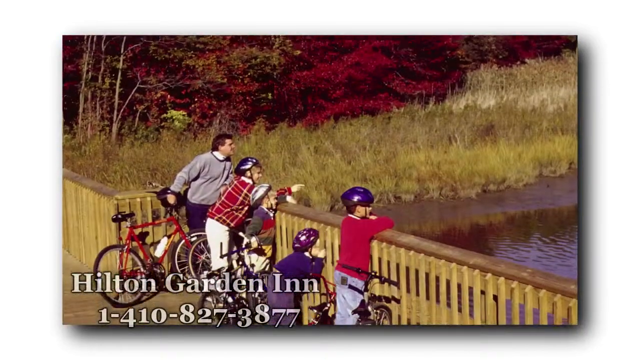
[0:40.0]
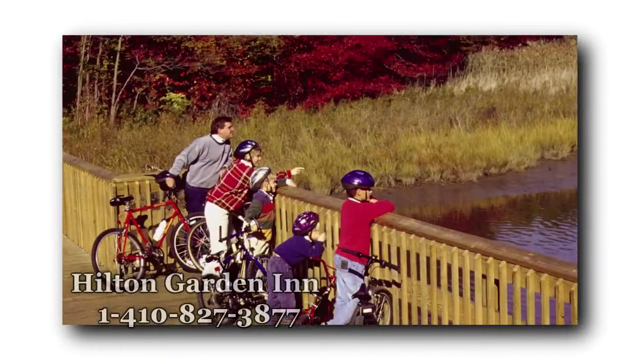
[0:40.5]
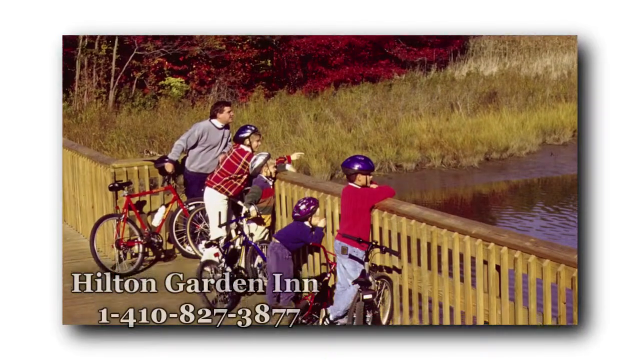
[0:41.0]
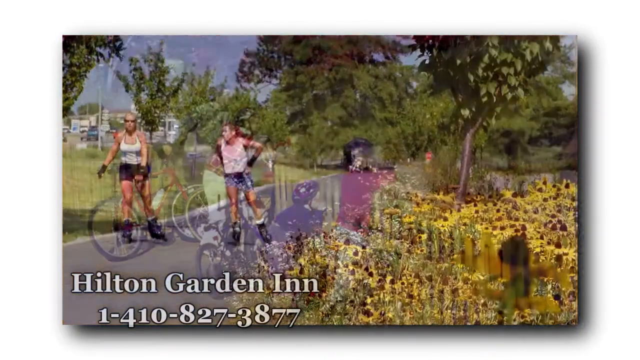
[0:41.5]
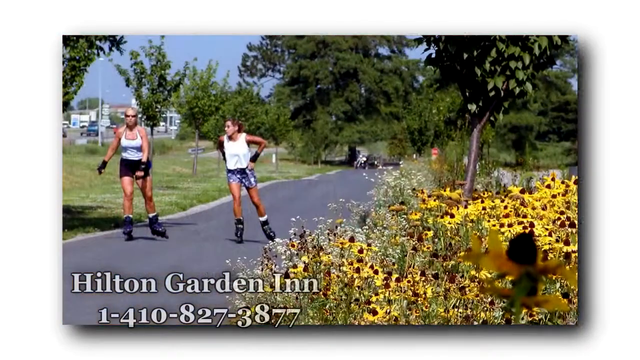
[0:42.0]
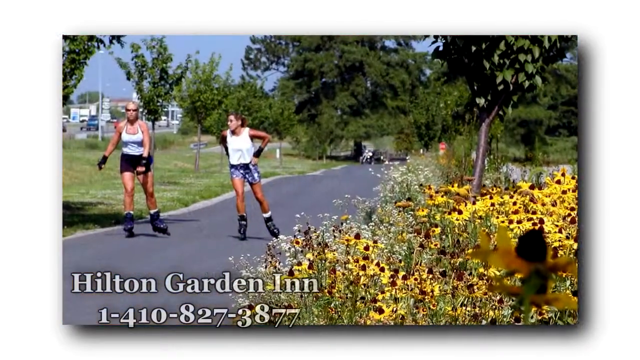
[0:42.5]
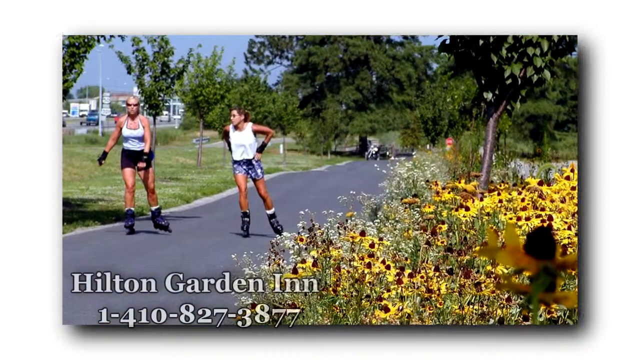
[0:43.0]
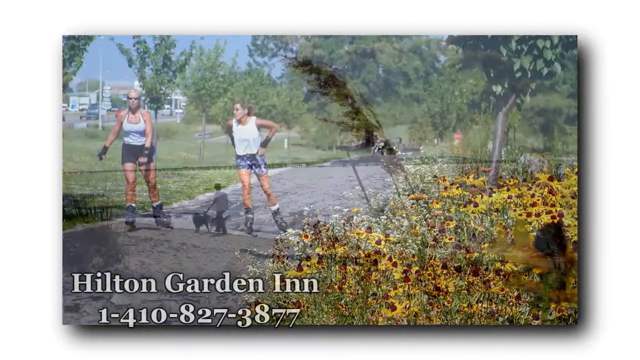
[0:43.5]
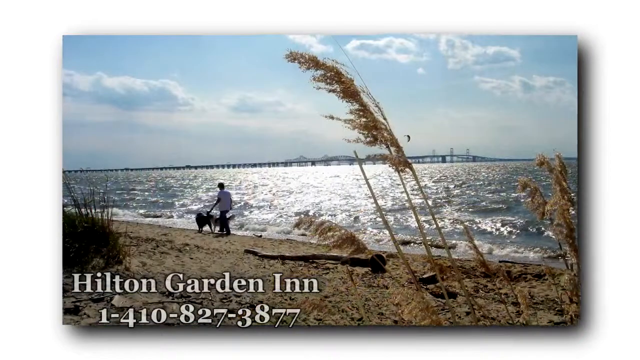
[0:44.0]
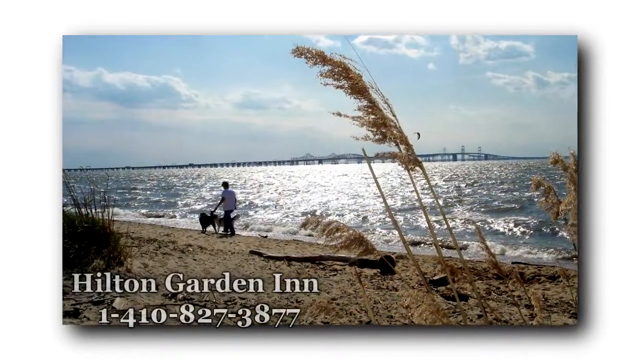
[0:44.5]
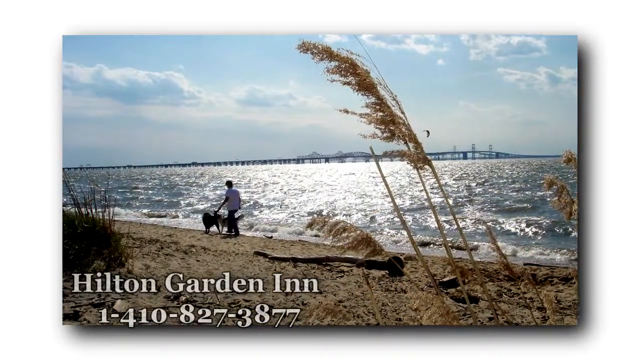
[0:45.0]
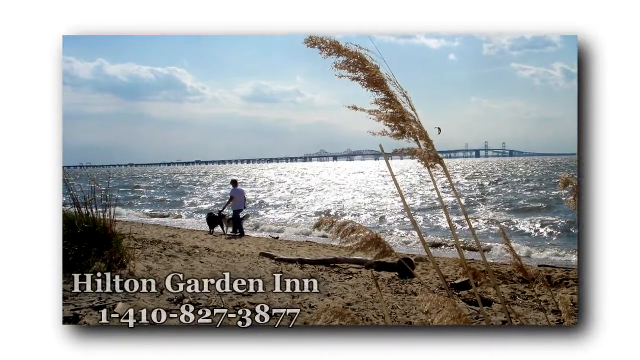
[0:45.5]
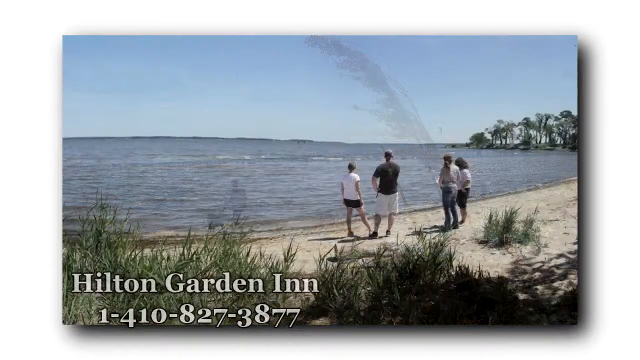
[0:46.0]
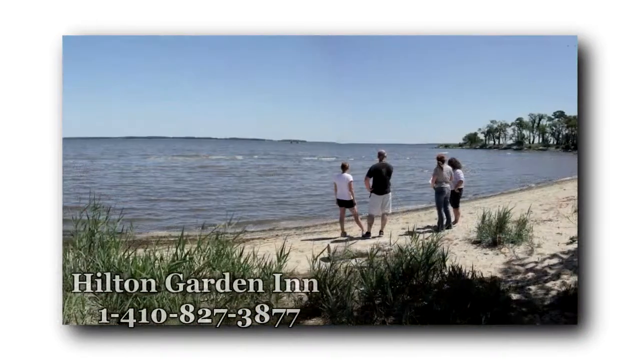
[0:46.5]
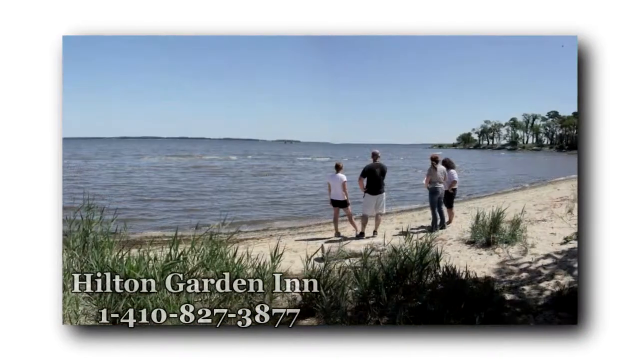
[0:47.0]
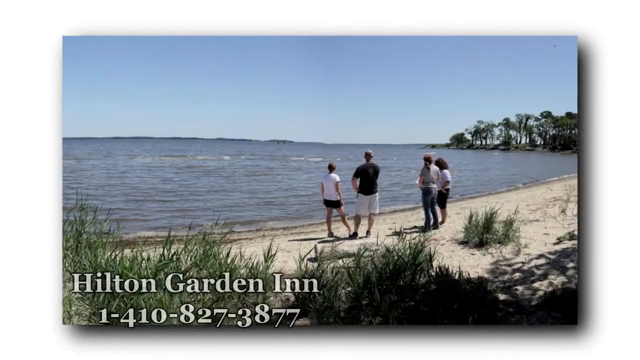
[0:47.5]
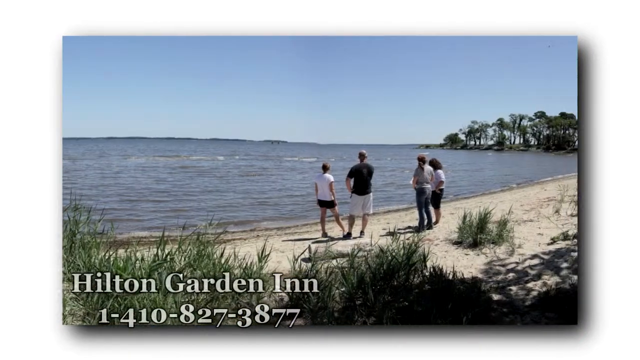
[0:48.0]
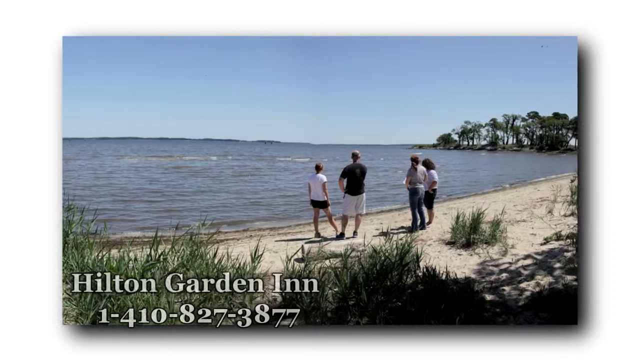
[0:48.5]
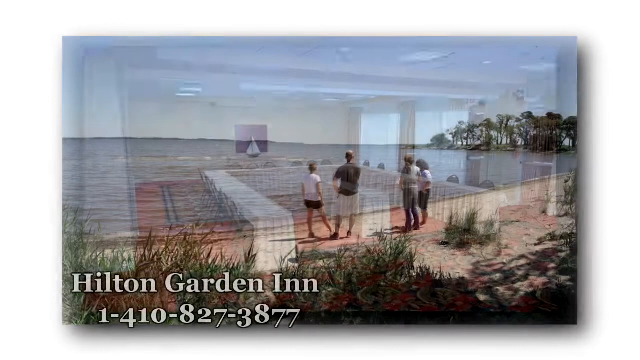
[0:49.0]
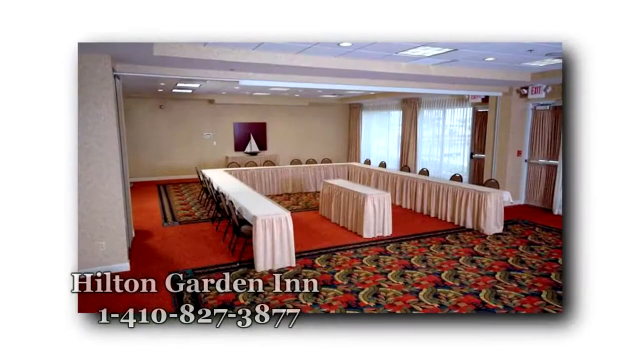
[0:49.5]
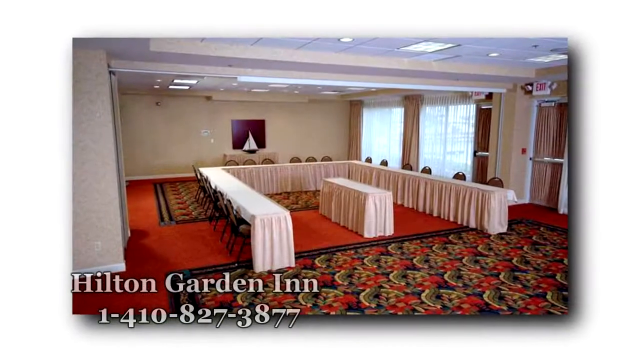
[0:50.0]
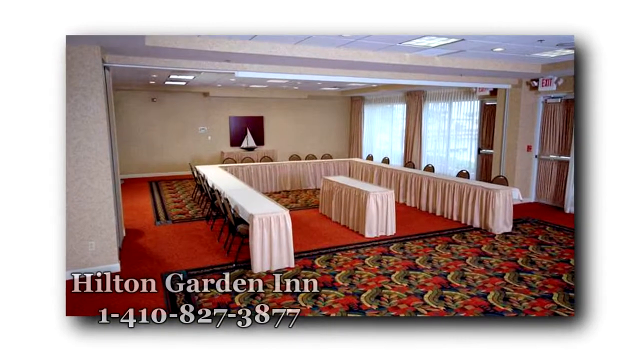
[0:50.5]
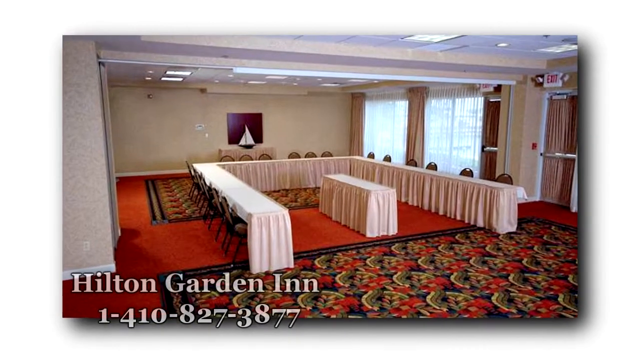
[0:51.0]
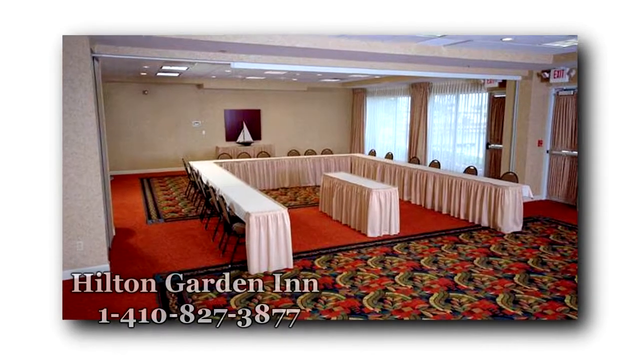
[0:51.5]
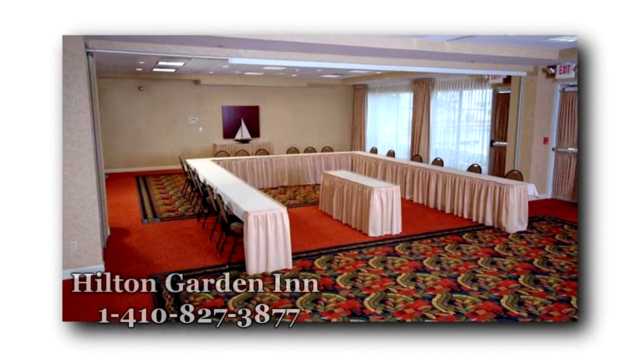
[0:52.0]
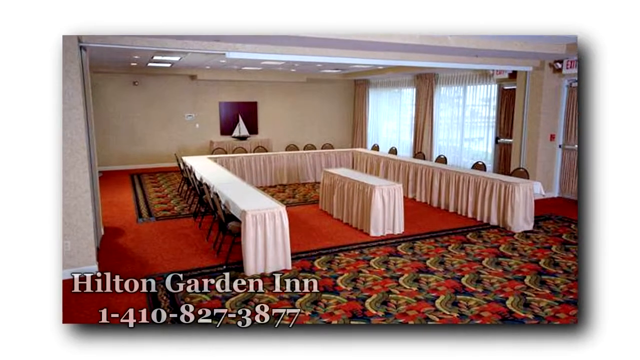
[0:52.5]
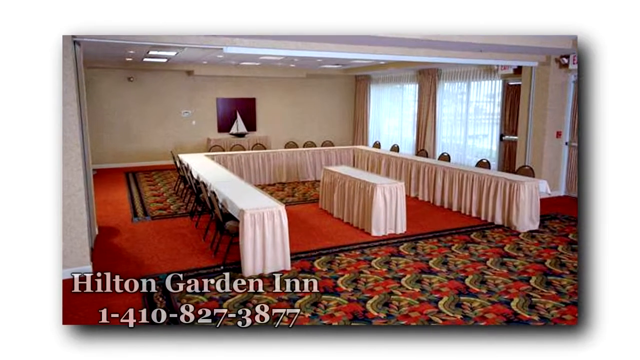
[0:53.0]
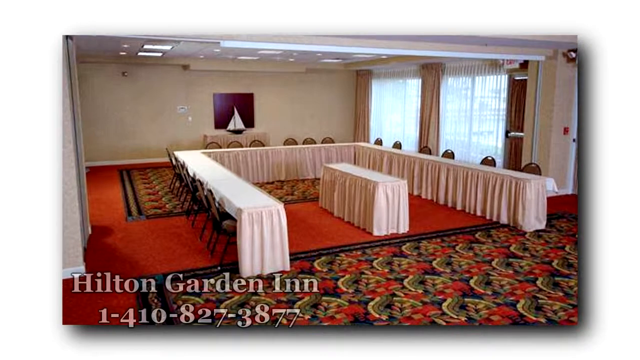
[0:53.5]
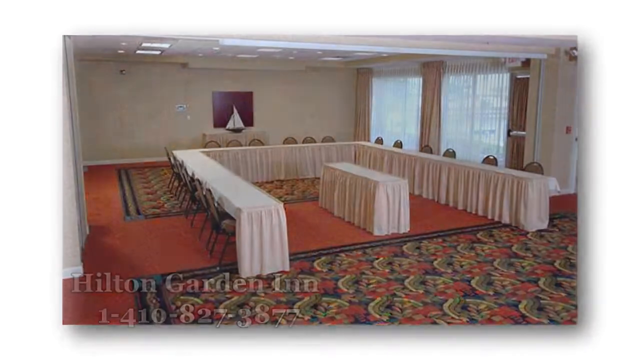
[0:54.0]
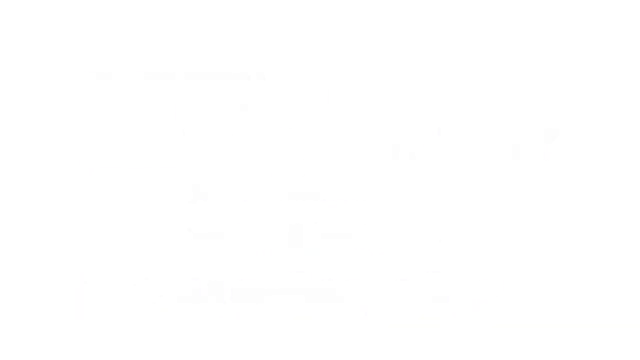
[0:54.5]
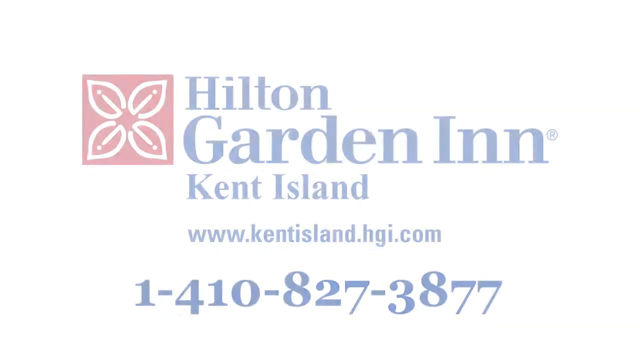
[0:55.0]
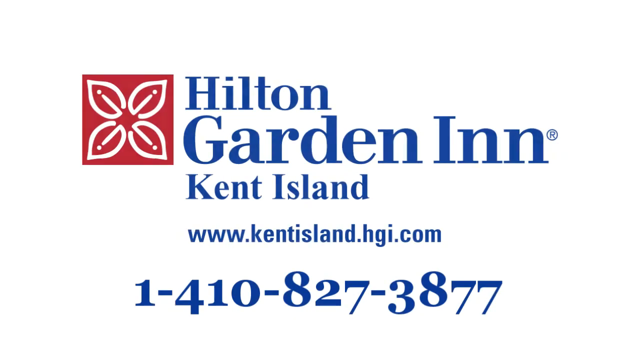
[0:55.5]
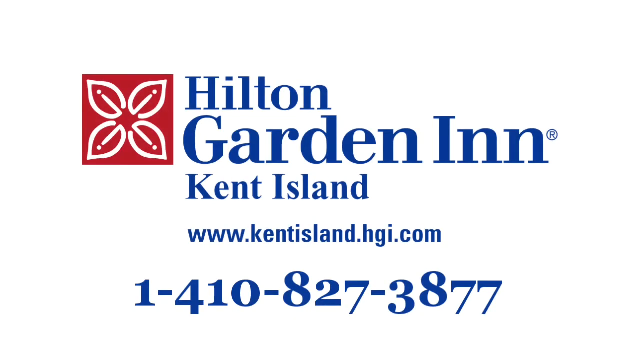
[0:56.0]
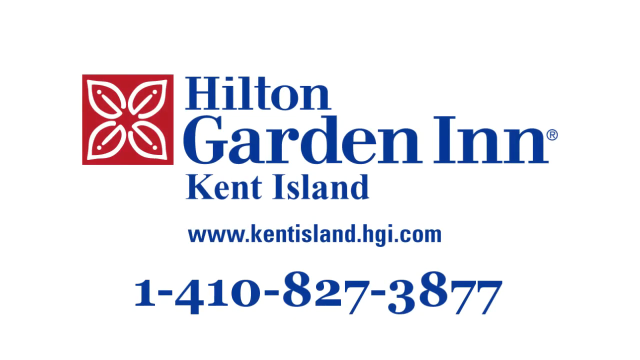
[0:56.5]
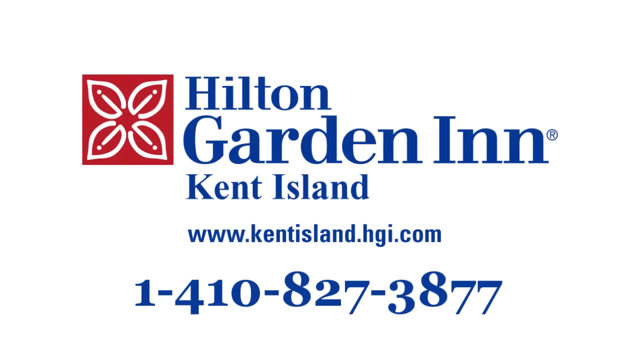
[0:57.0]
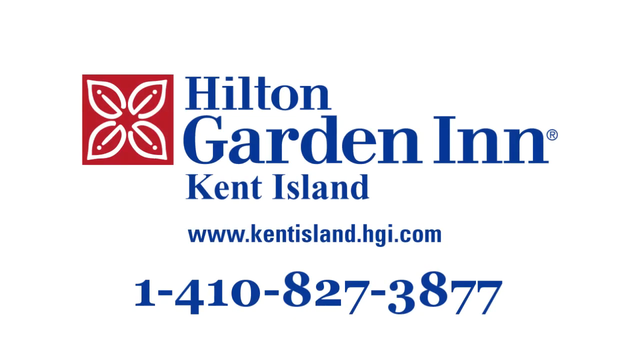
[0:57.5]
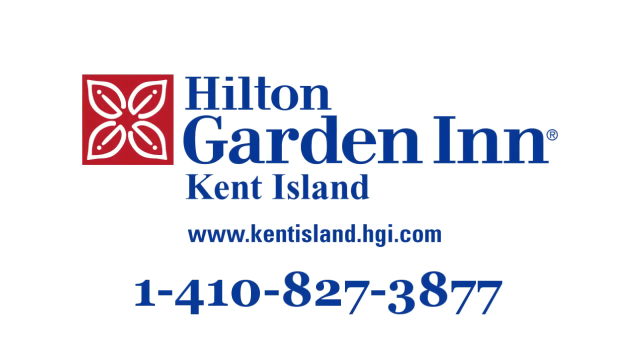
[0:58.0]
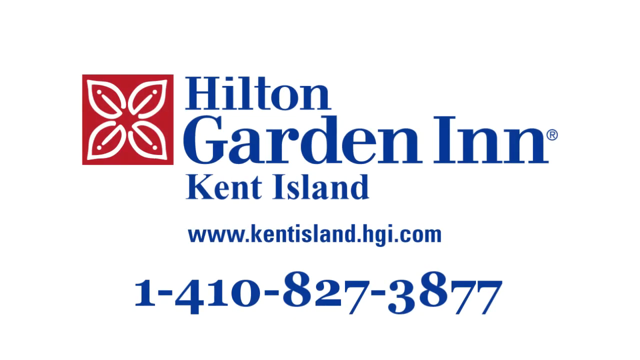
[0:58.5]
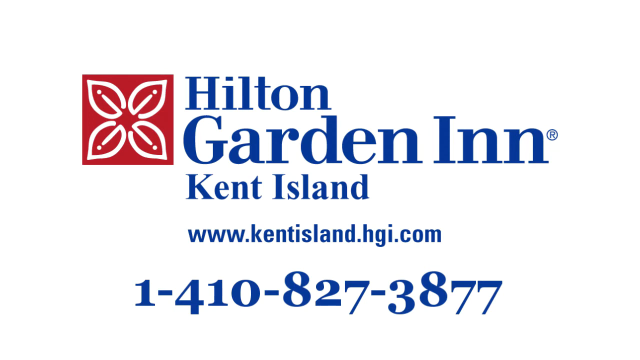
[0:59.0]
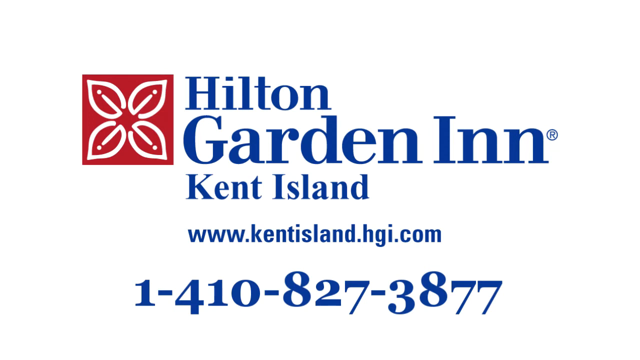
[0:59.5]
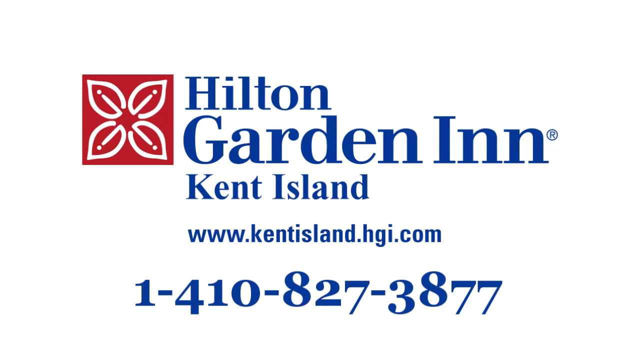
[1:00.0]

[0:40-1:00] The ad for the Hilton Garden Inn shows the hotel on a marina, with a Maryland flag, and a big bridge that goes across the water is visible. A phone number, 14108273877, is given to call for anyone interested in staying there. Activities are shown: rollerblading and a walk on the beach, with some pampas grass, and then other people on the beach looking at something. A banquet room follows, with tables set up as though for a wedding reception and a space for the wedding cake in the middle of an area arranged like the letter C. The text reads "Hilton Garden Inn, Kent Island, www.kenteisland.hgi.com".